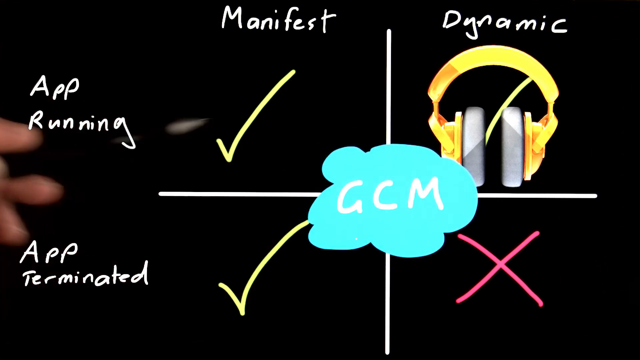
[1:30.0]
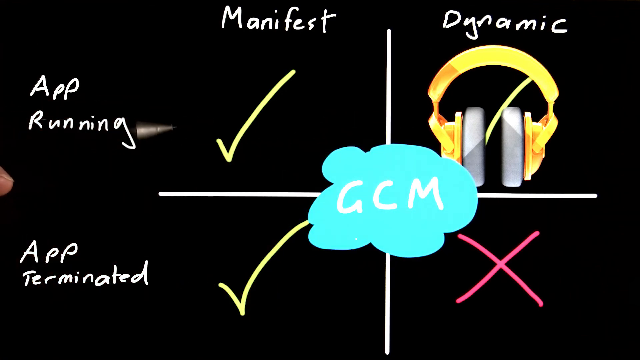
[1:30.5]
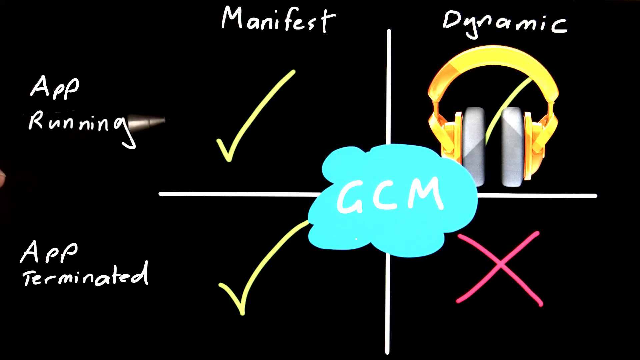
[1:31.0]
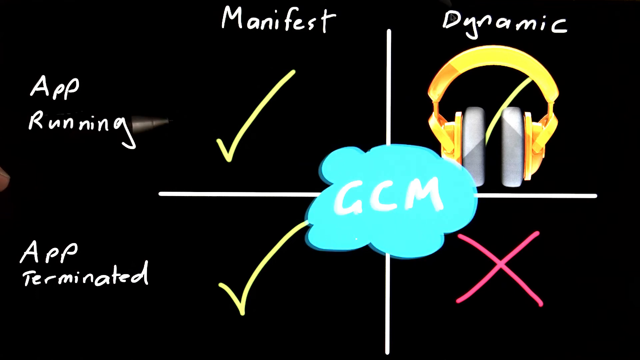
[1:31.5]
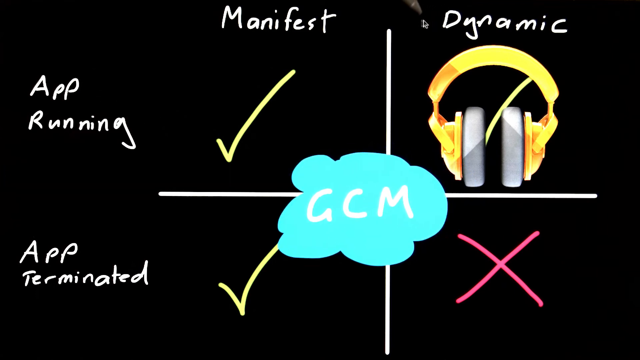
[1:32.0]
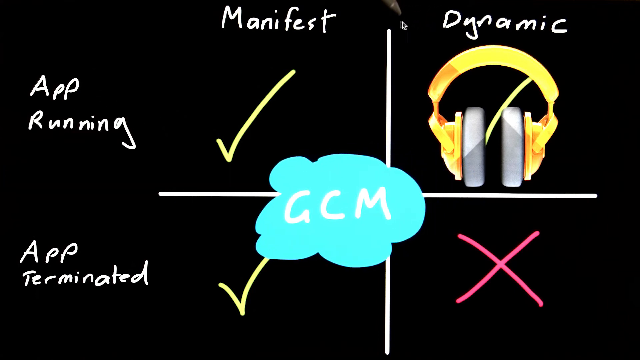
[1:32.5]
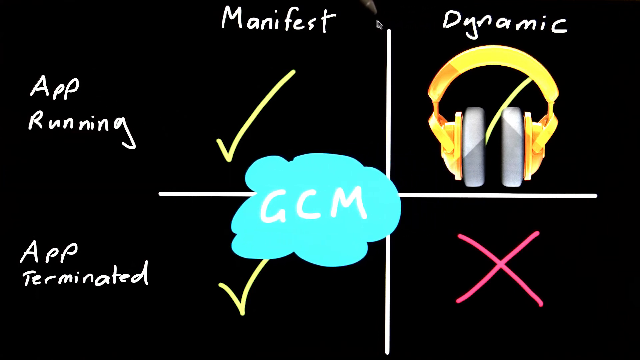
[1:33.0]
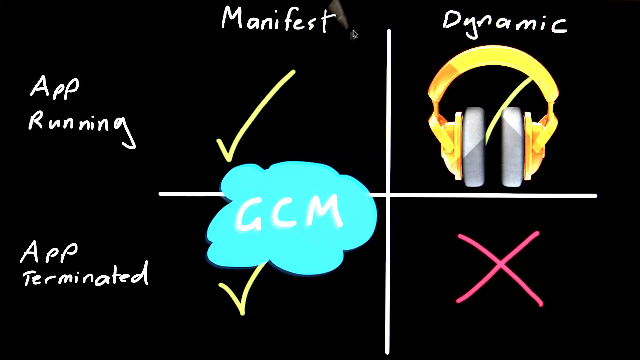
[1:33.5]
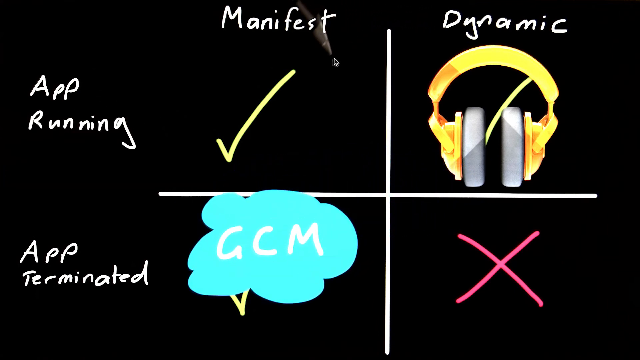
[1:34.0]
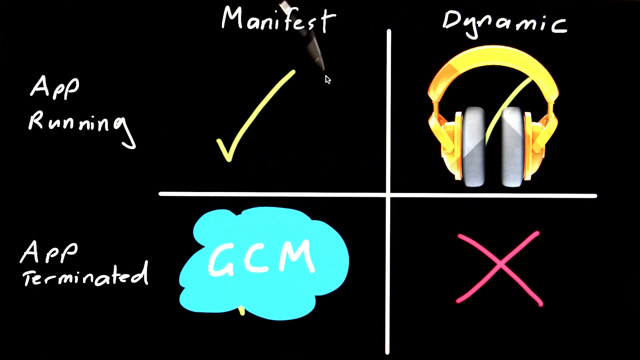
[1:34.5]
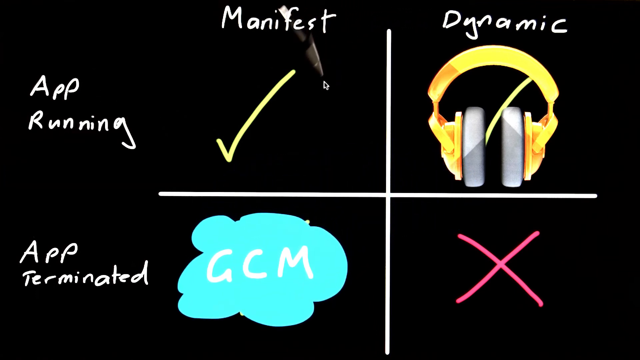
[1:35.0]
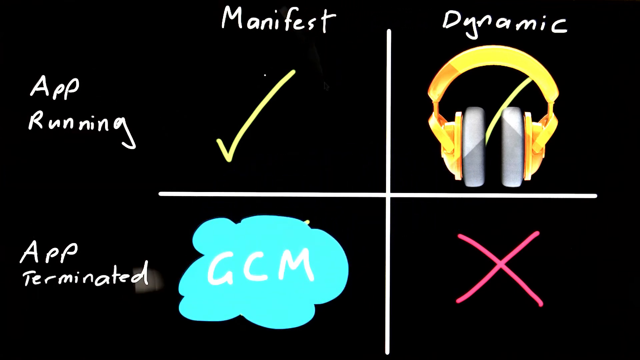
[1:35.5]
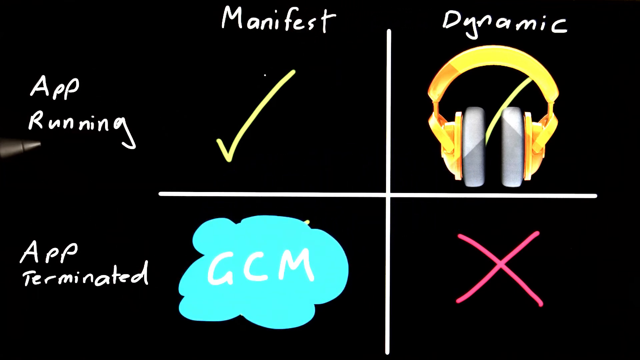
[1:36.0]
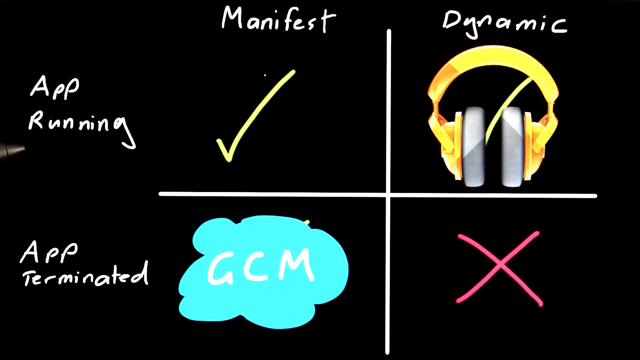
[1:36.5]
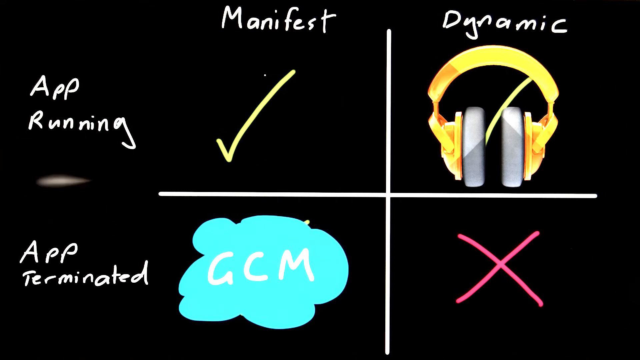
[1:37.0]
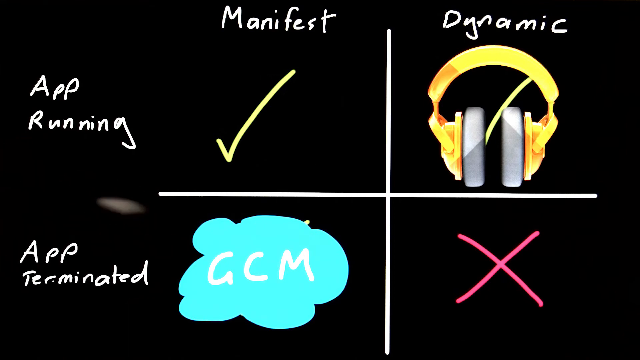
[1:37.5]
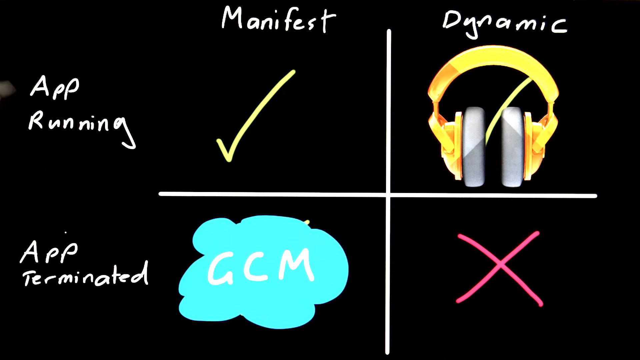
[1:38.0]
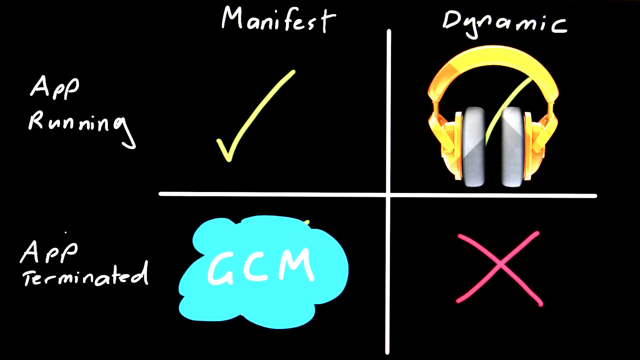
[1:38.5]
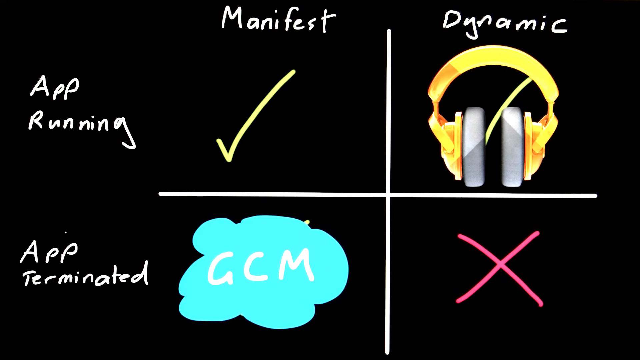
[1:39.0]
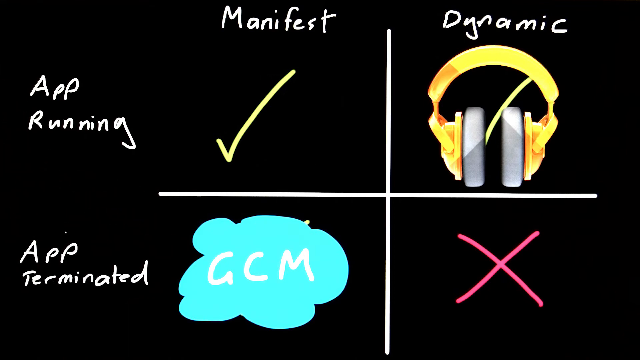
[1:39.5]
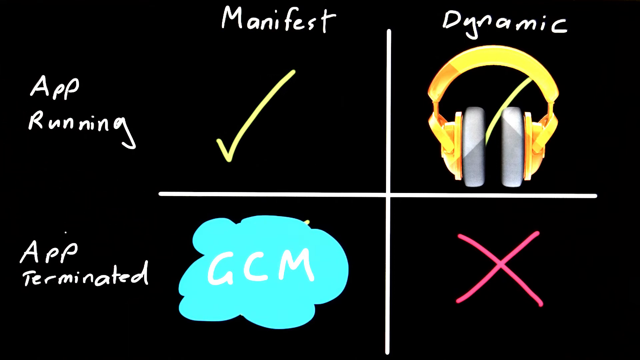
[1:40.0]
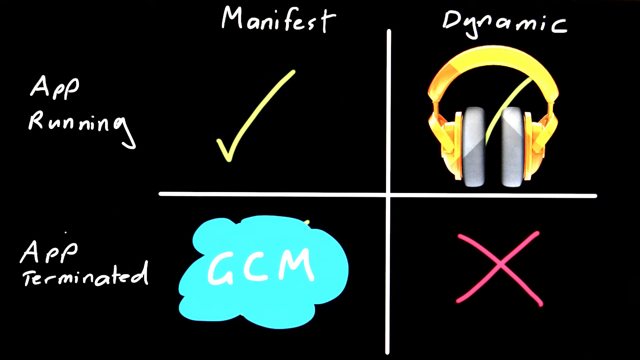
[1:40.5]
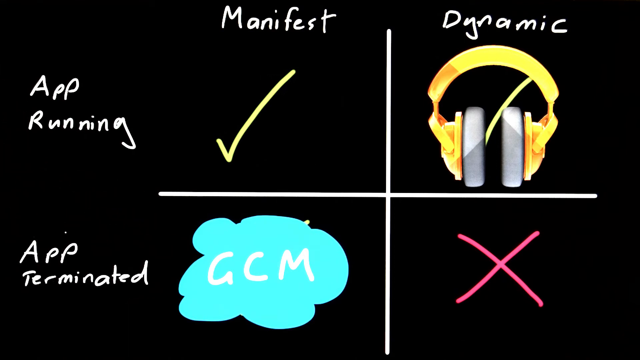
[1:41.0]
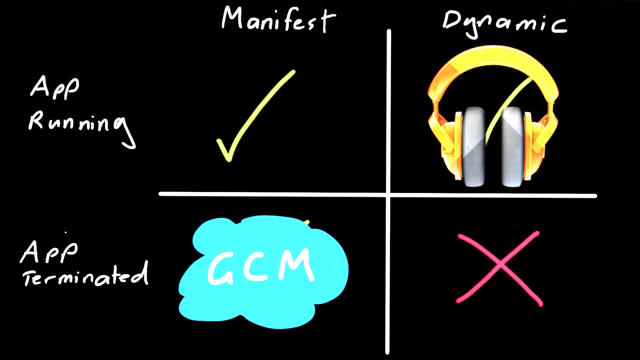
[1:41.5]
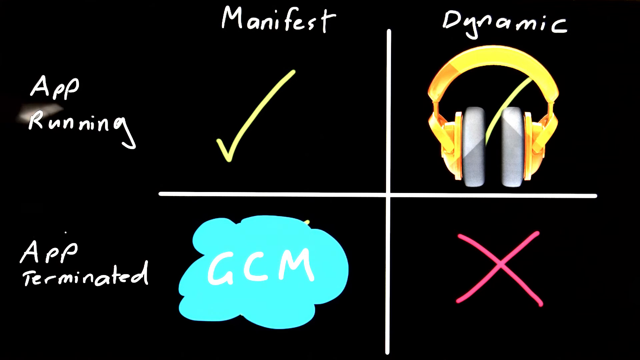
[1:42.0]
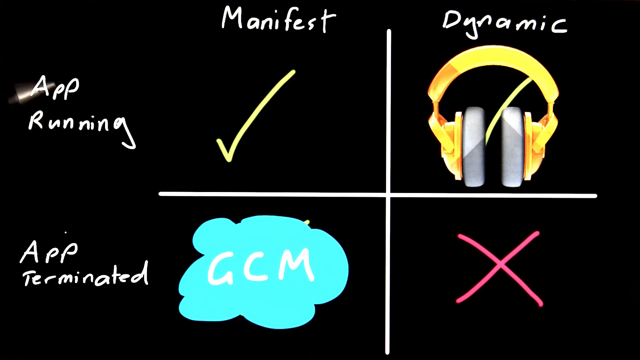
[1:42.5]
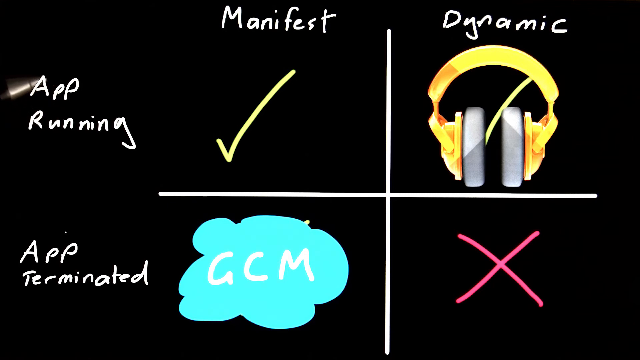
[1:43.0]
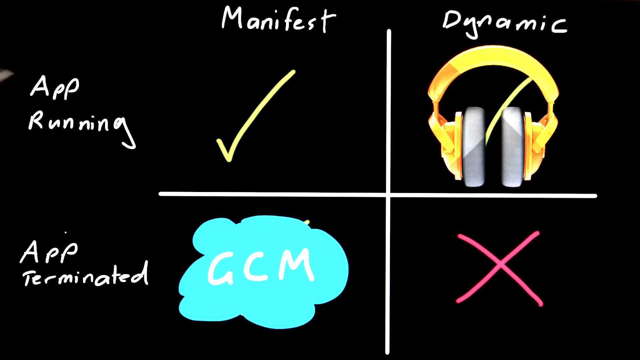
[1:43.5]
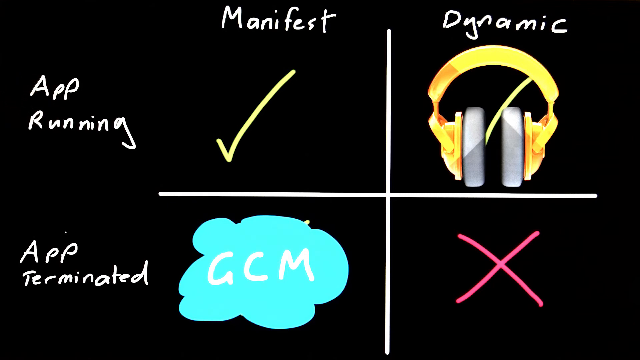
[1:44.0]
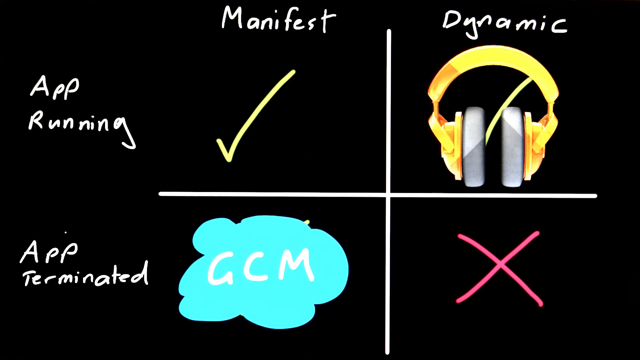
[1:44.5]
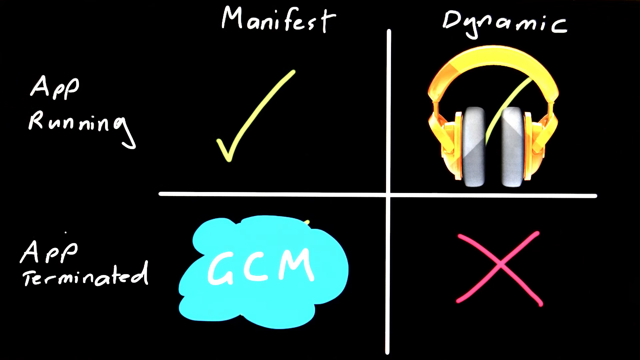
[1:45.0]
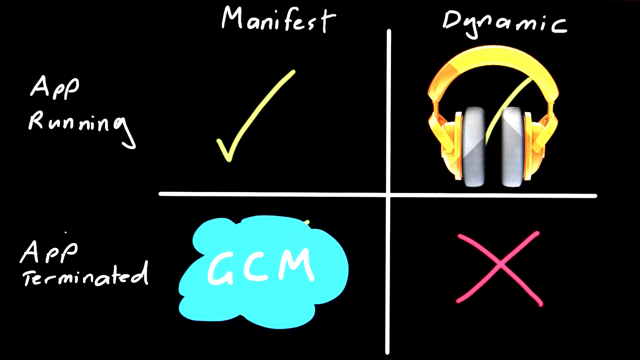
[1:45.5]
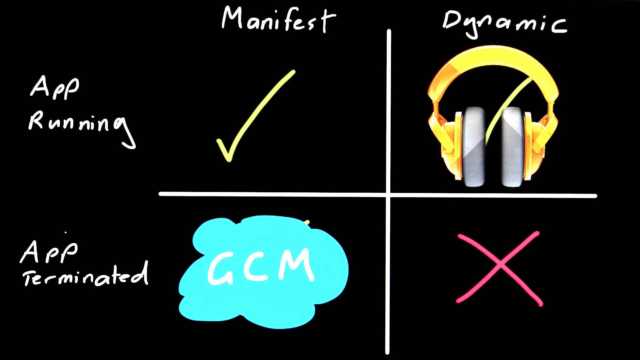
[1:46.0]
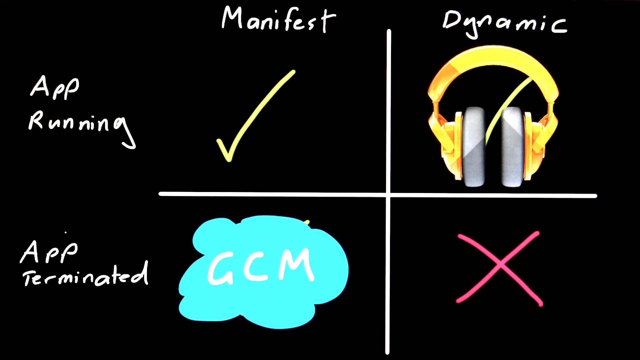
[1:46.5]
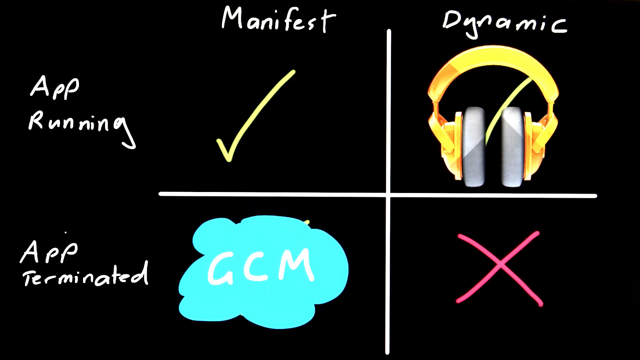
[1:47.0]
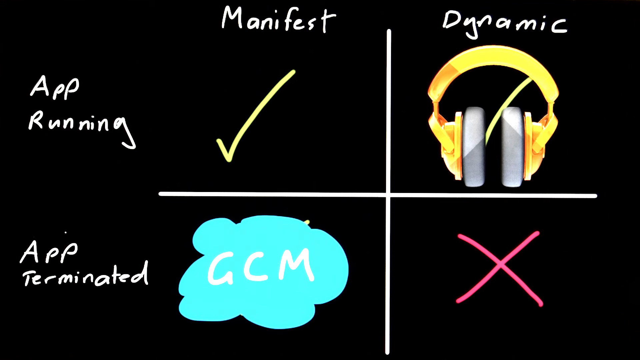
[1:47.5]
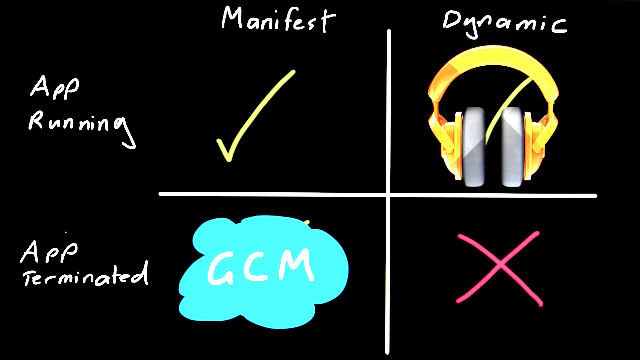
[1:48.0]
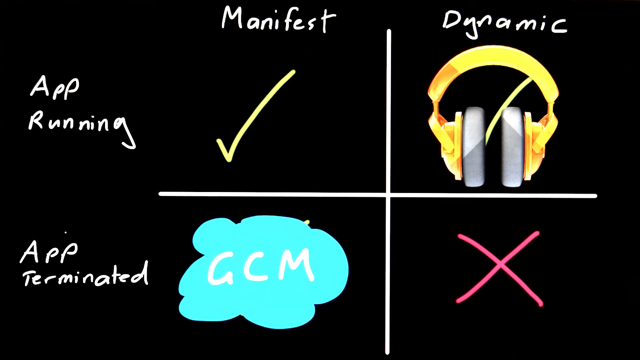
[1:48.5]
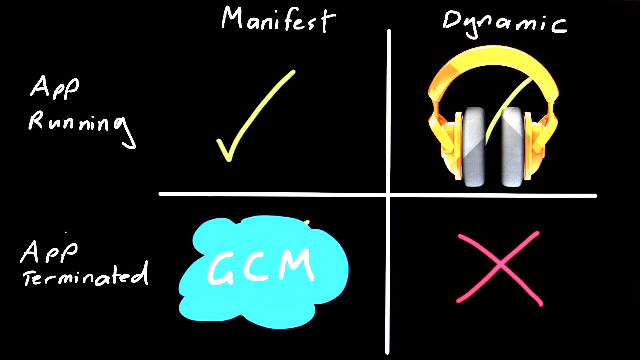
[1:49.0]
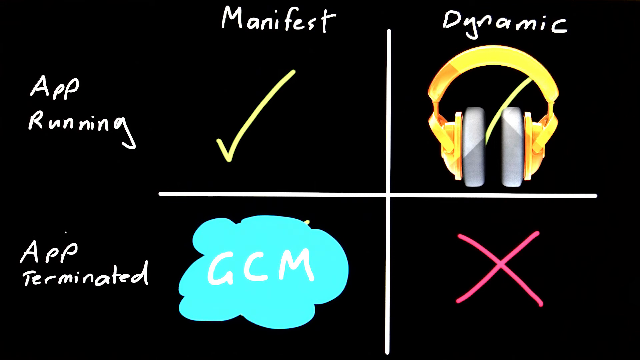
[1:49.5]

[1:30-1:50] A blue word bubble with three white letters reading "GCM" is in the center of the screen, and a pair of headphones is in the upper right box of the square boxes. The pen moves around on the left side of the screen in a circular motion. Eventually the person uses the pen, which appears to work as a mouse pointer, to move the blue GCM word bubble into the lower left box, which has a green check mark; to the left of that box it says "app terminated" and straight above it says "manifest." The video appears to be a demonstration by someone programming or coding an app.